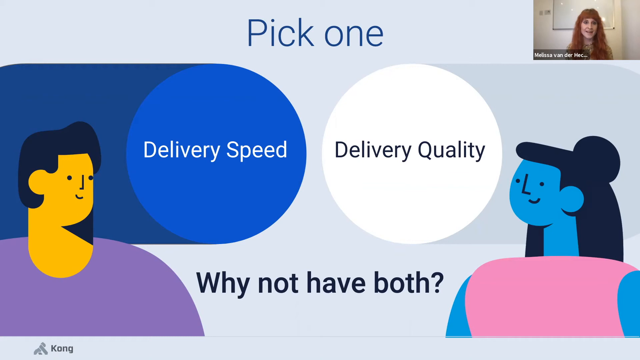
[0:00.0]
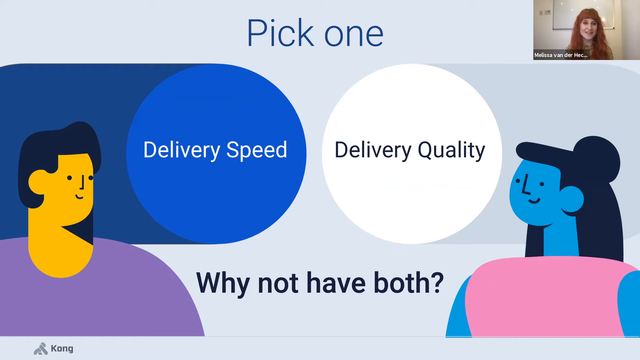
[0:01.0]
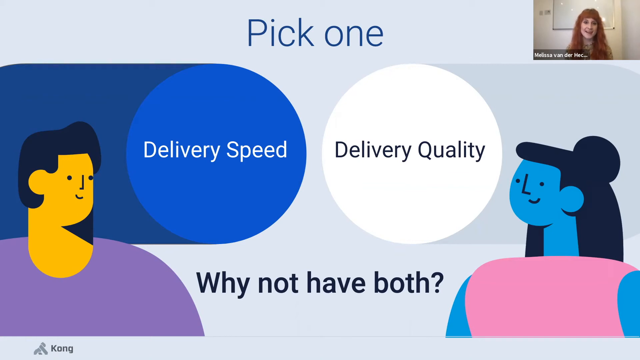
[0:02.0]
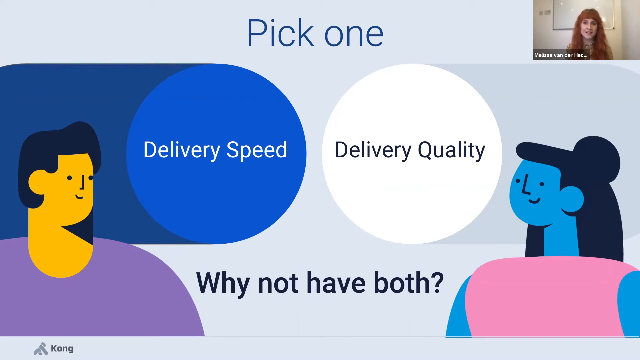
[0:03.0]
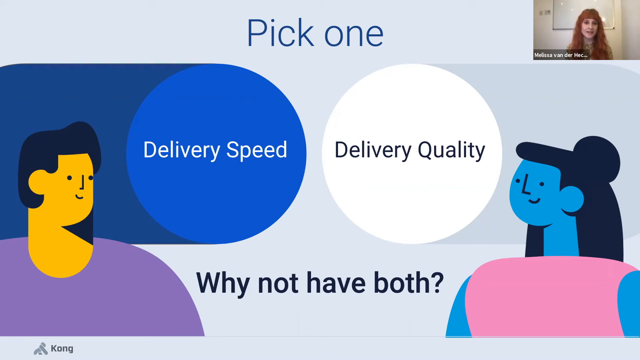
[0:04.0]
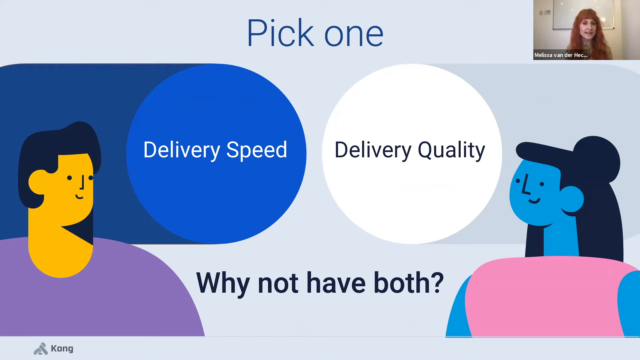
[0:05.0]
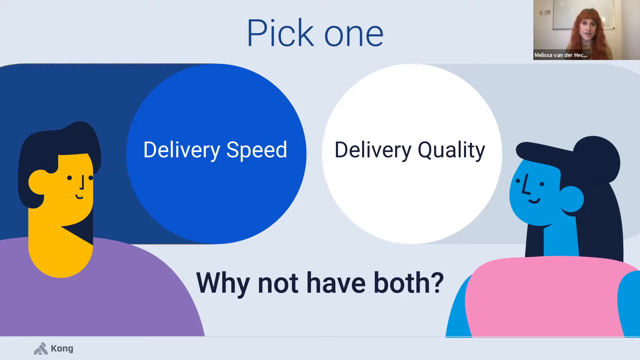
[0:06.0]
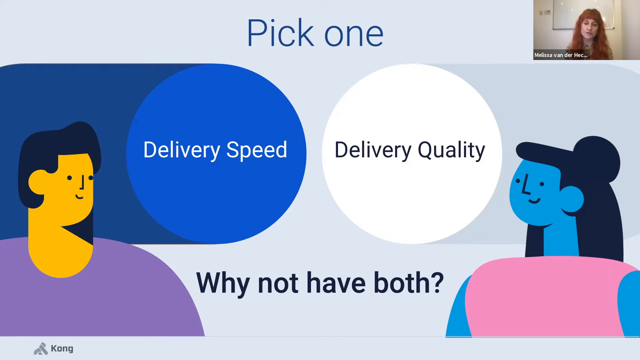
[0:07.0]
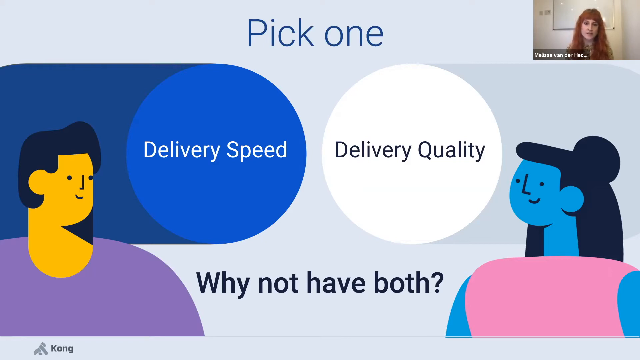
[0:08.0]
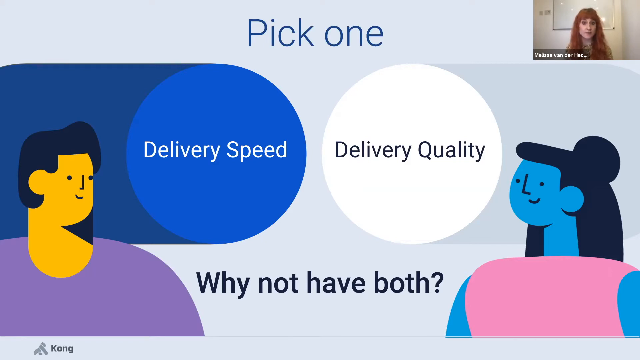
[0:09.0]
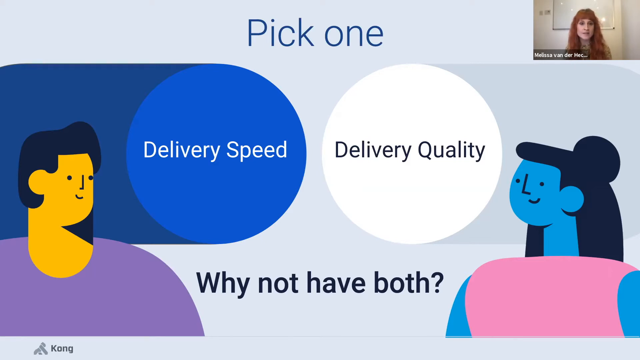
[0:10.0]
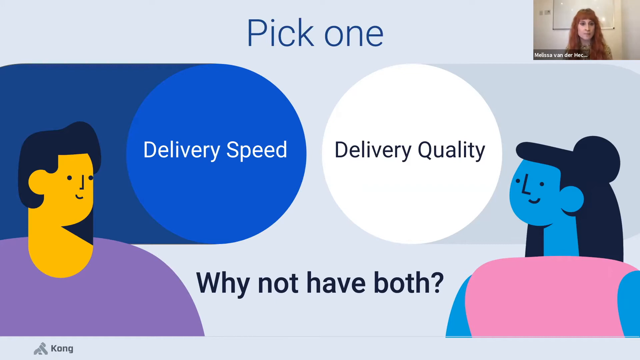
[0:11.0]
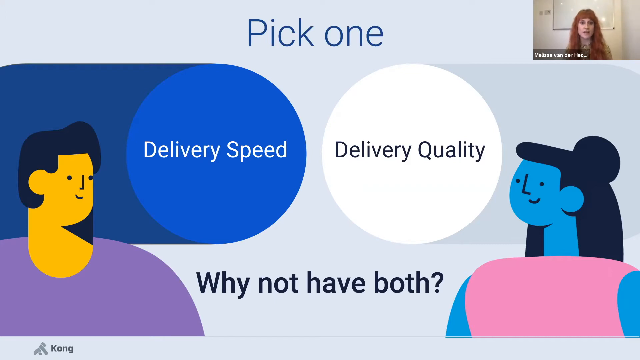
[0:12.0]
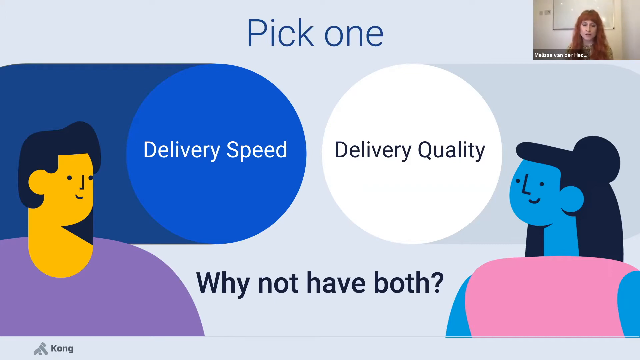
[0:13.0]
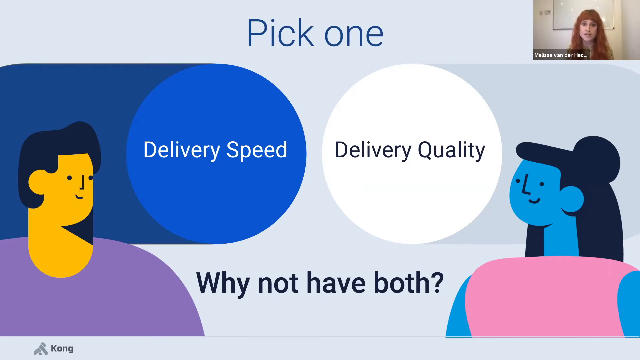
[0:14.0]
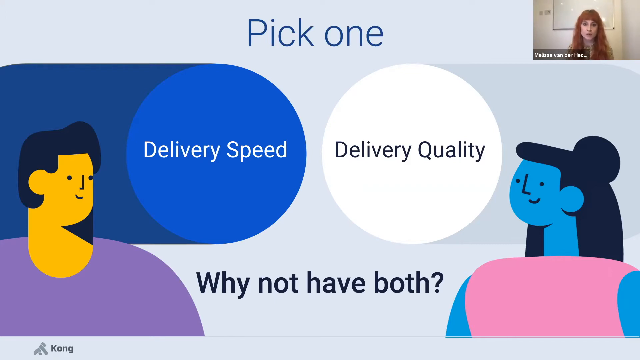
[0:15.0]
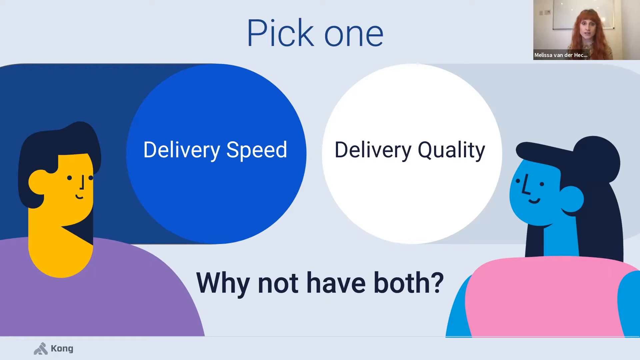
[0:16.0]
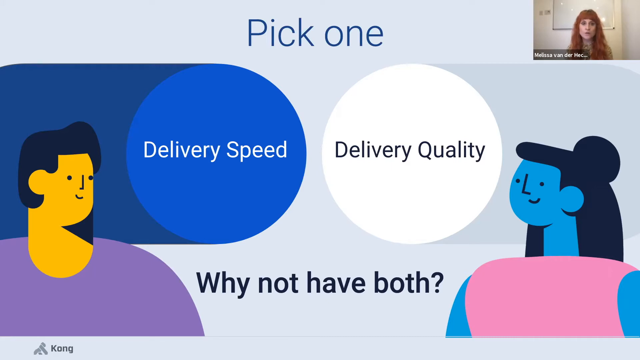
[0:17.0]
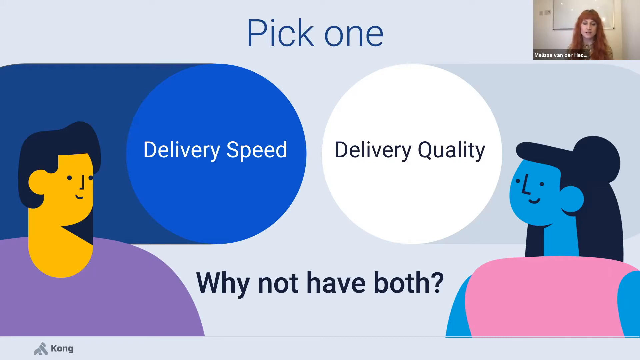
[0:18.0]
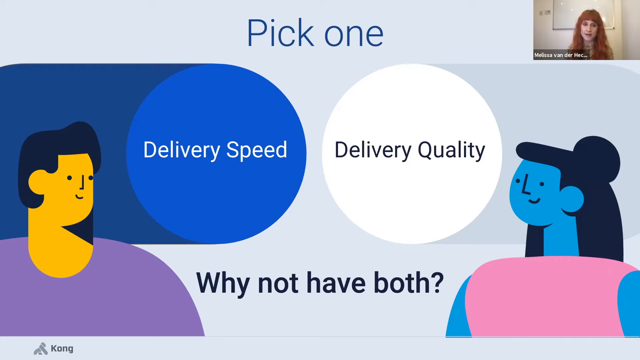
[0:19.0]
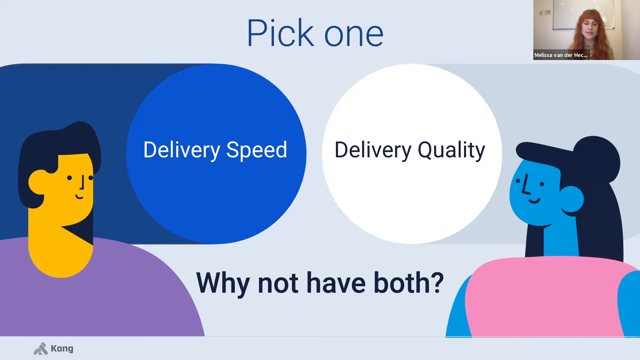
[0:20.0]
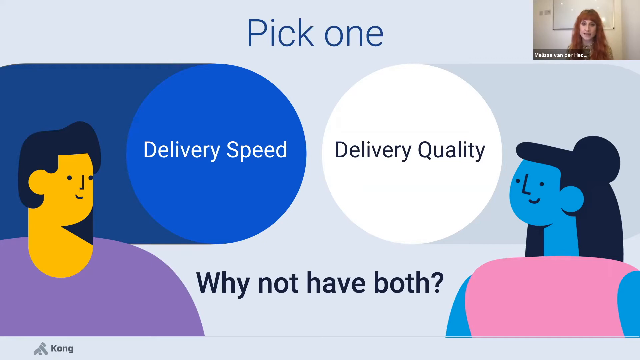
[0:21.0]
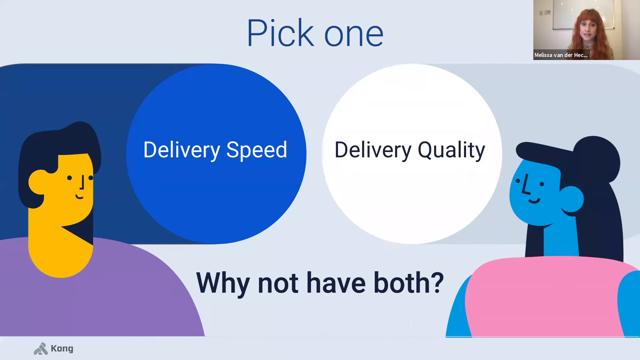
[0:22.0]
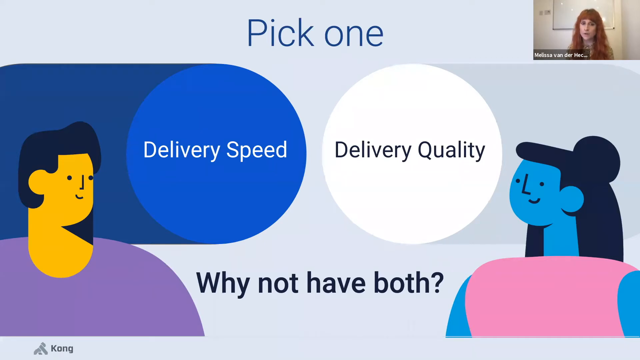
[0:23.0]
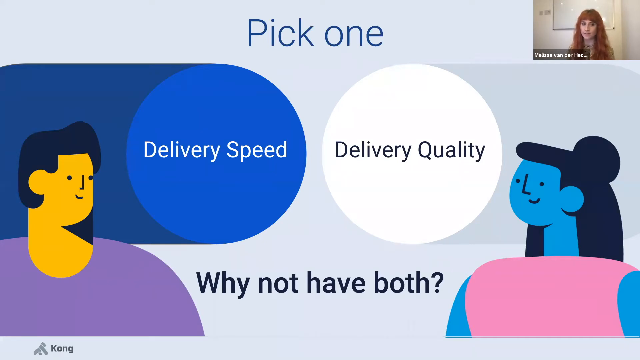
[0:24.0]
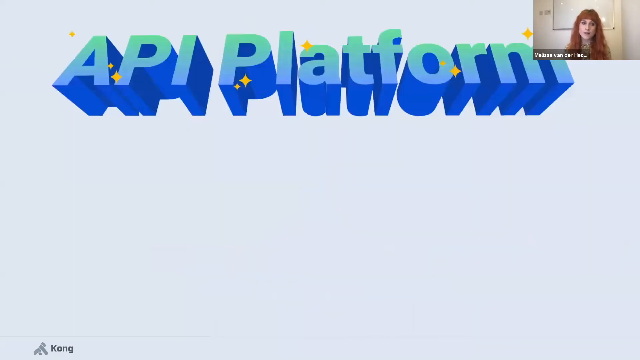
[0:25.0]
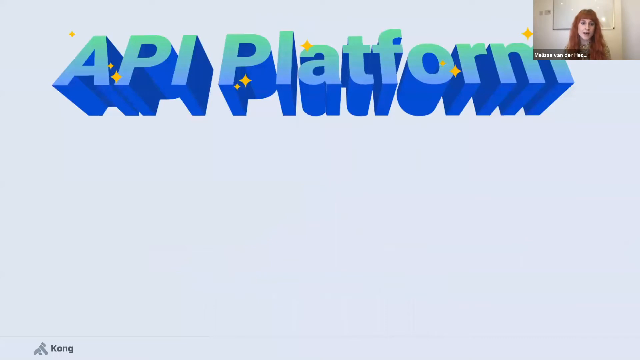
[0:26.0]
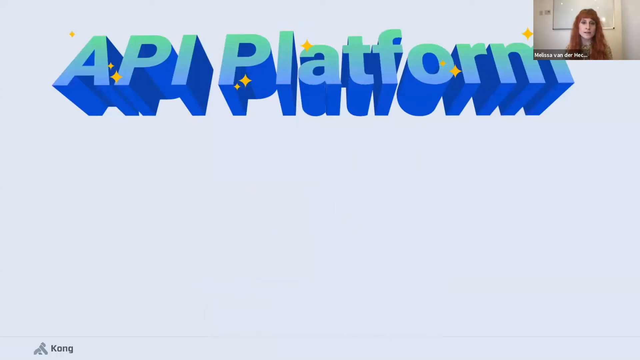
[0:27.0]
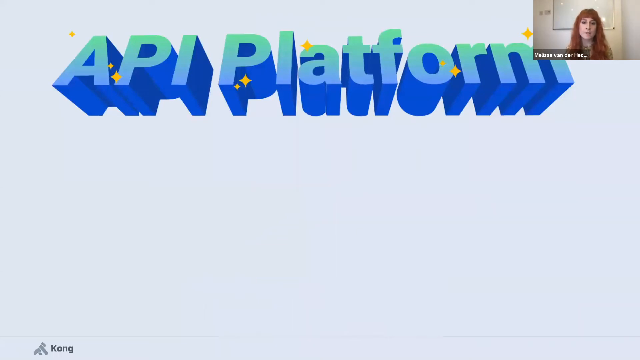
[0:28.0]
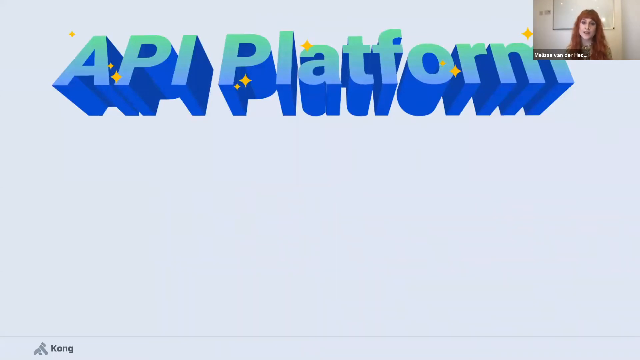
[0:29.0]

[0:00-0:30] The video looks like a PowerPoint slide with a smaller video in the top right-hand corner. At first the slide is static. At the top is blue text that says "pick one". Below it are two more pieces of text, each within a circle: the first says "delivery speed" and the second says "delivery quality". Beneath that is the phrase "why not have both?" On either side of this text are figures: on the left, a vector drawing of a man with yellow skin and a purple shirt, and on the right, a vector drawing of a woman with blue skin and a pink shirt. The video in the top corner shows a real woman from roughly her chest up to her head; she appears to be speaking. She has red wavy hair, and her mouth moves relatively quickly. A few seconds in, she continues speaking, and the slide that makes up most of the screen changes to display the words "API Platform" in a gradient of purple, blue and green text, with an effect that makes them look 3D.